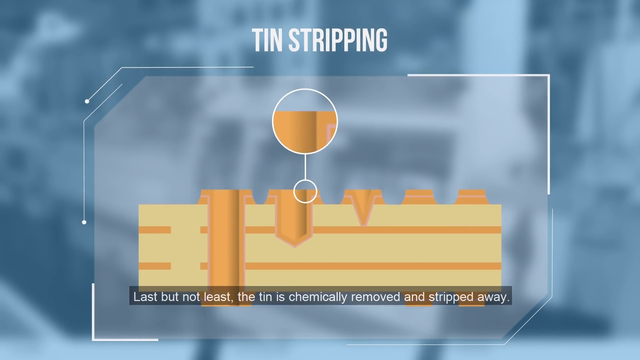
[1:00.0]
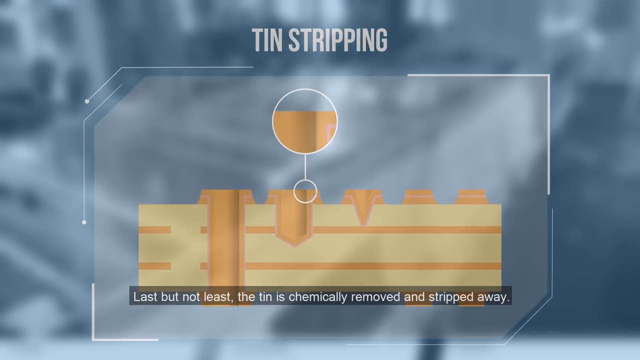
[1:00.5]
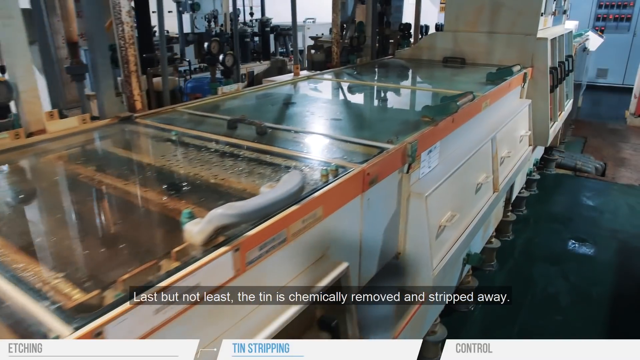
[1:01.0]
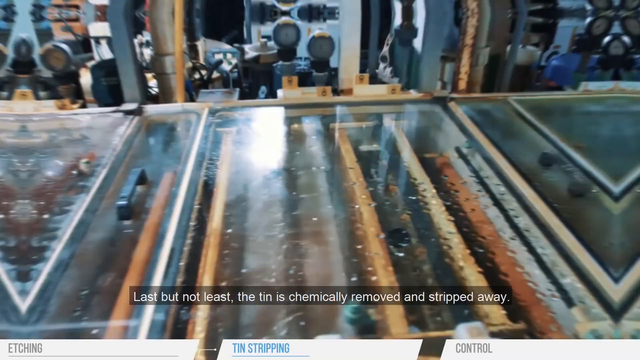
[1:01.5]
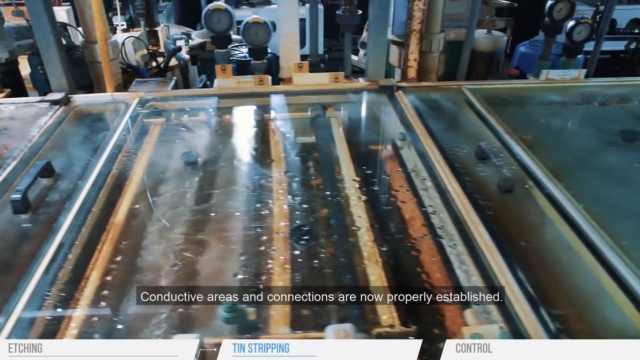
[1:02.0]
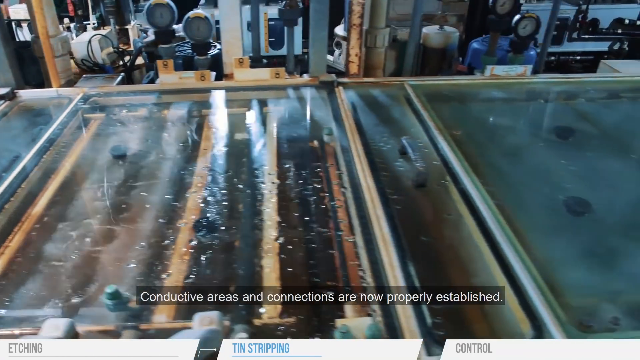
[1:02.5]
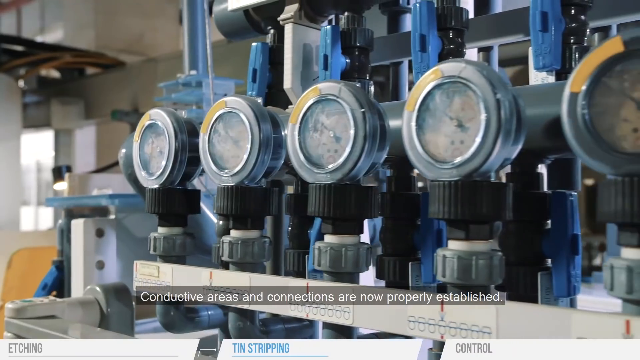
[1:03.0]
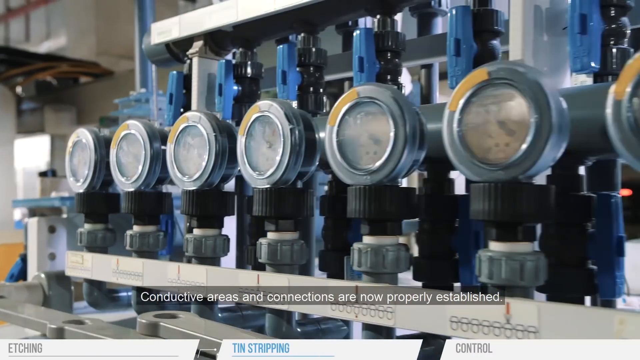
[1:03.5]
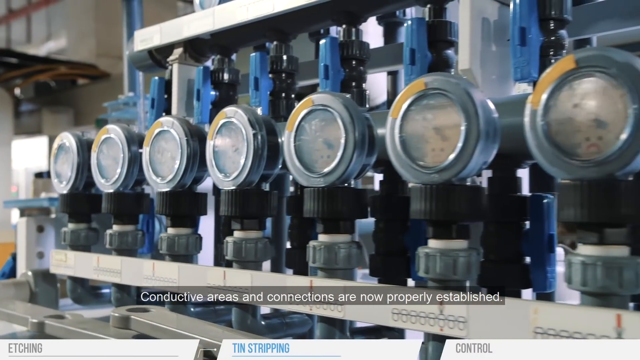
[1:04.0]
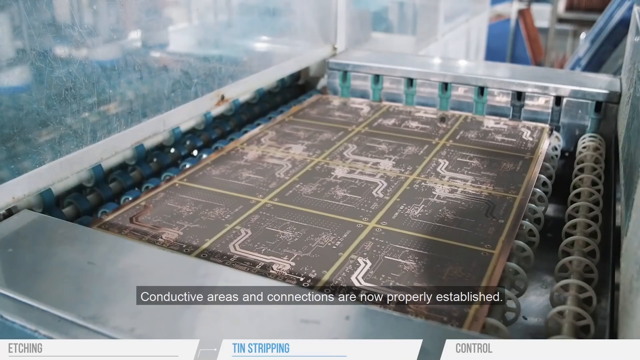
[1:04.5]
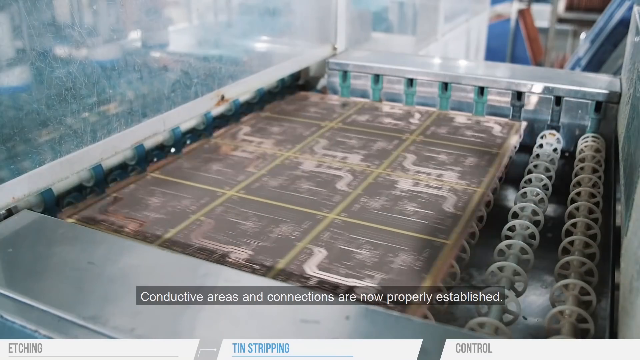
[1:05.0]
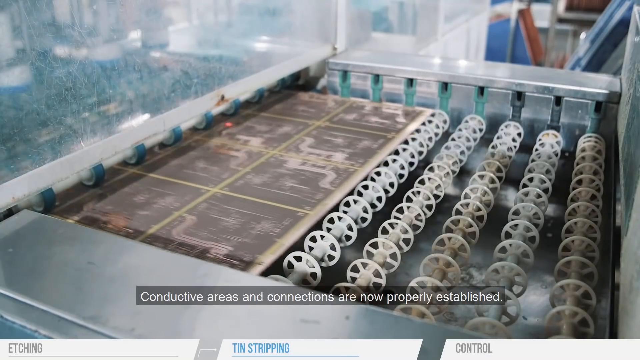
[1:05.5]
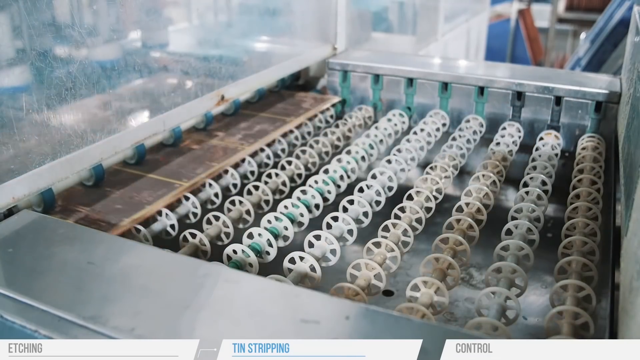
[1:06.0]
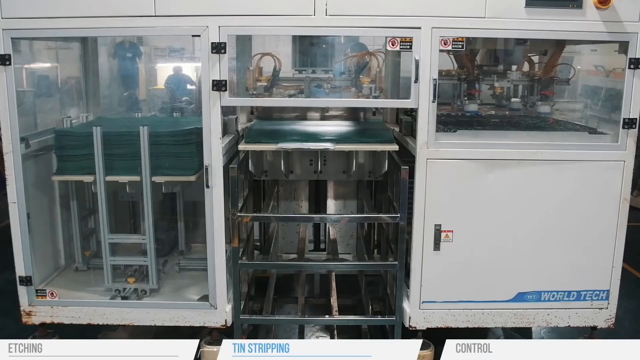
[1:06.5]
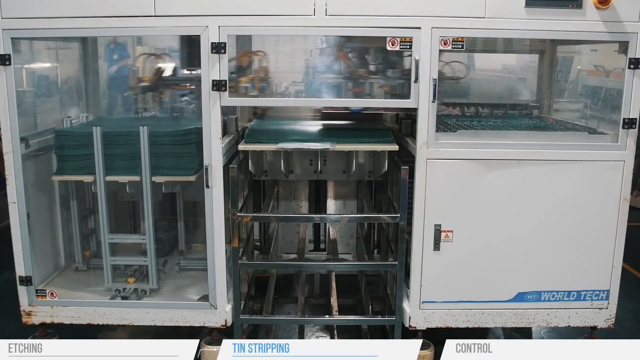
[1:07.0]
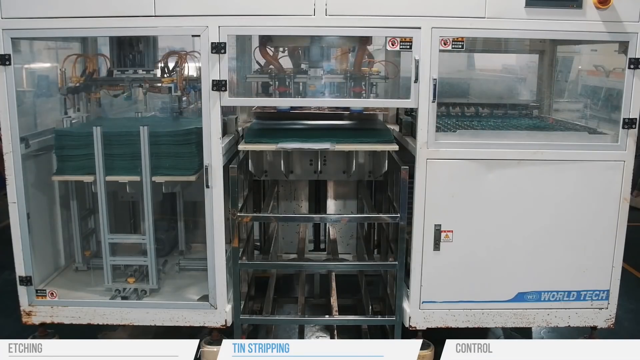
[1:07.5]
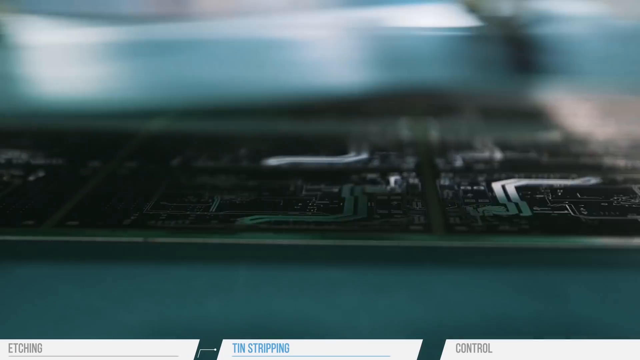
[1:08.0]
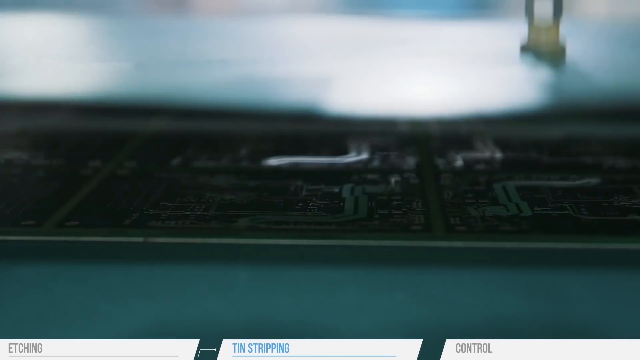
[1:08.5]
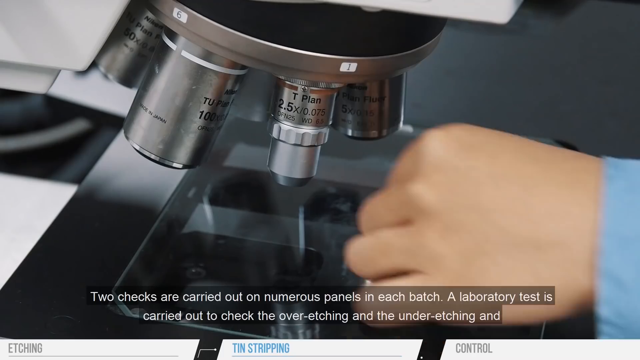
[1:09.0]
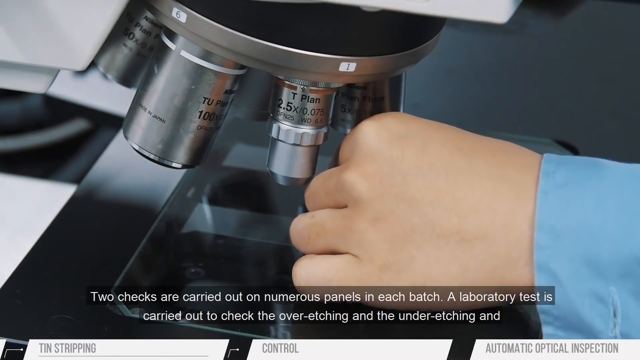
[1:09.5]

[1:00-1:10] An illustration of the equipment is shown with the text "last but not least the tin is chemically removed and stripped away". Various baths, sealed units and pressurized valves appear, and text mentions "conductive areas and connections are now properly established". The circuit boards move along various conveyor belts with little wheels, and automated arms reach down, grab the printed circuit boards and set them down carefully. Text then states that two checks are carried out on numerous panels in each batch and that a laboratory test is carried out to check the over-etching and the under-etching, while someone uses a high-powered microscope to inspect some sample circuit boards.